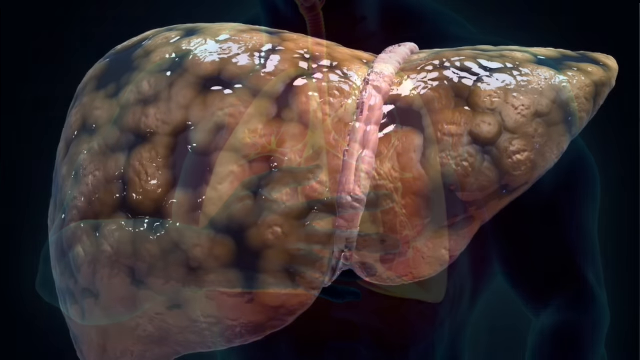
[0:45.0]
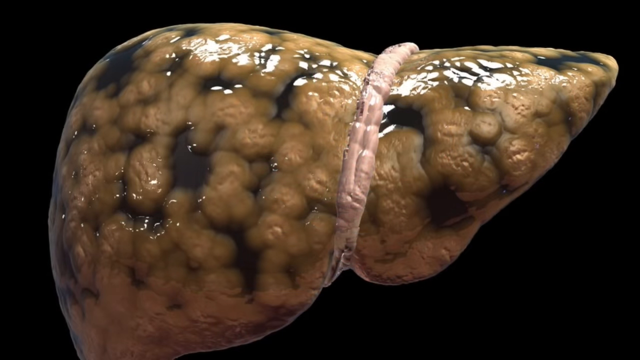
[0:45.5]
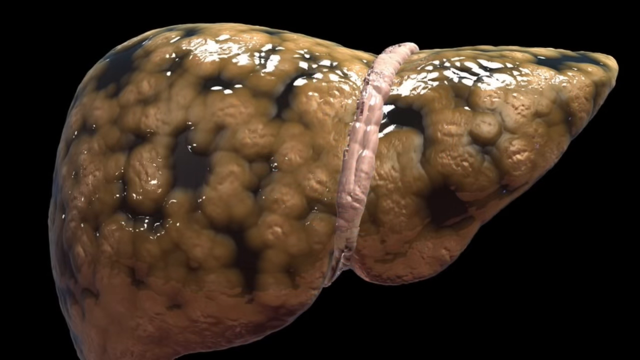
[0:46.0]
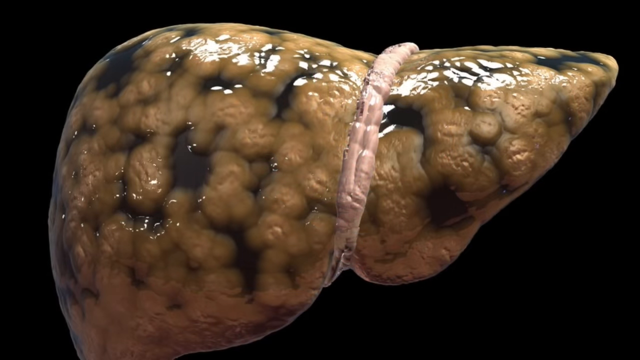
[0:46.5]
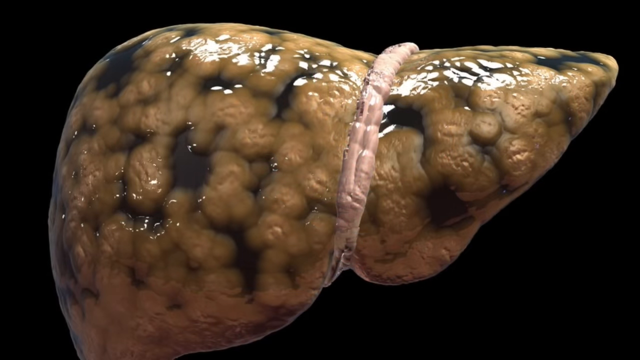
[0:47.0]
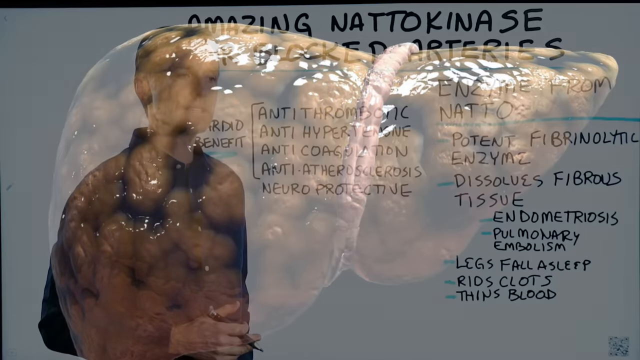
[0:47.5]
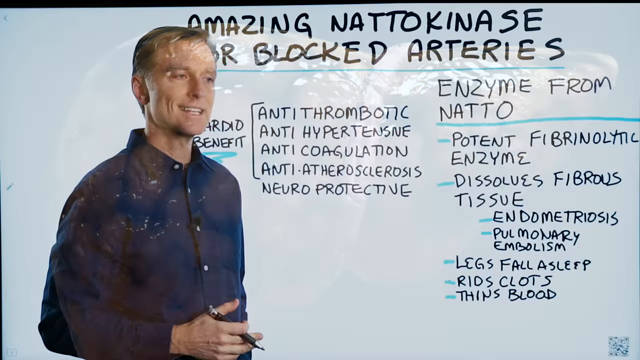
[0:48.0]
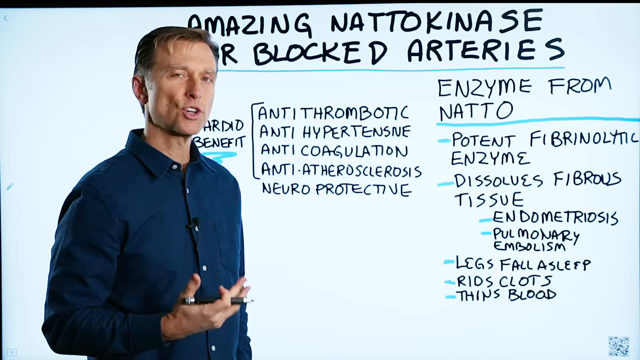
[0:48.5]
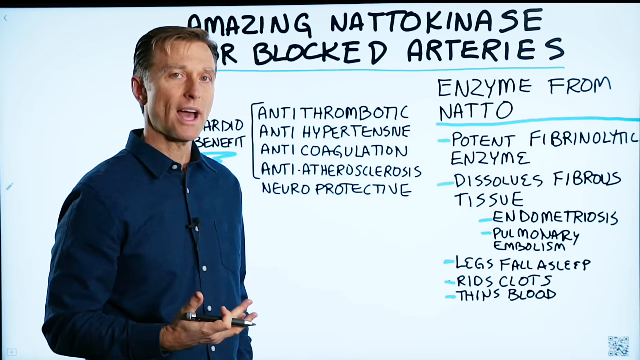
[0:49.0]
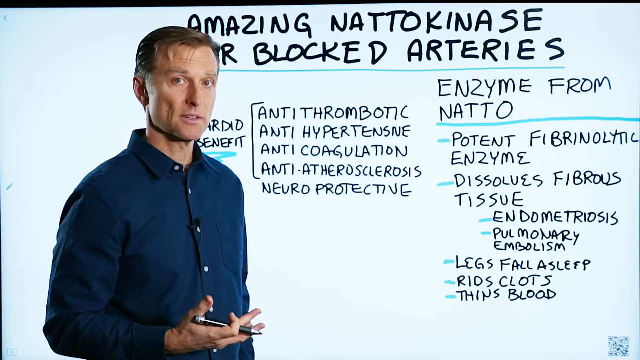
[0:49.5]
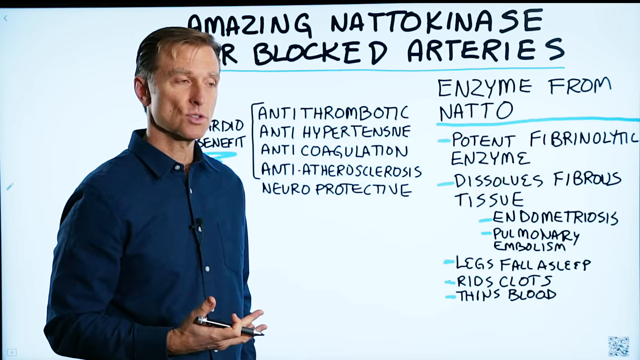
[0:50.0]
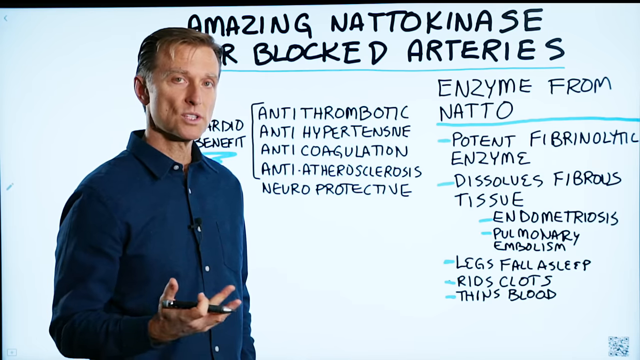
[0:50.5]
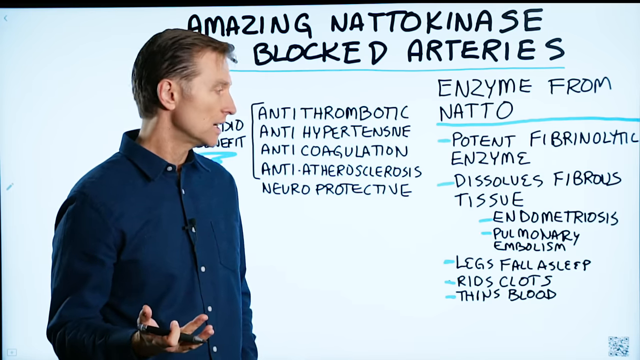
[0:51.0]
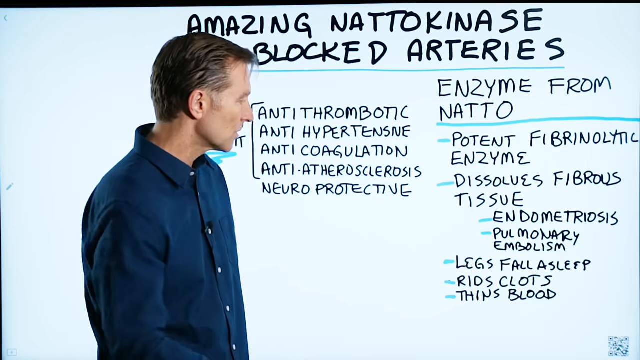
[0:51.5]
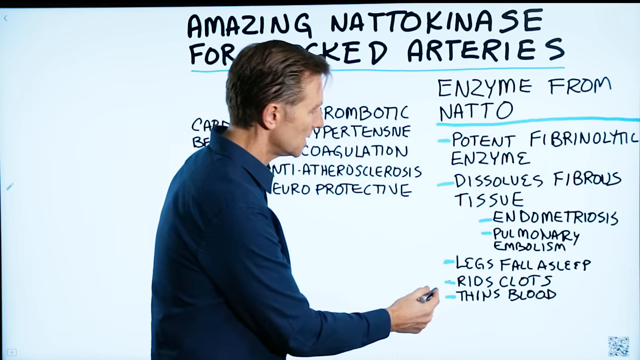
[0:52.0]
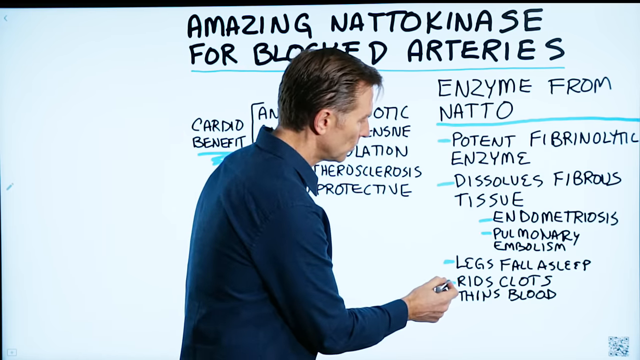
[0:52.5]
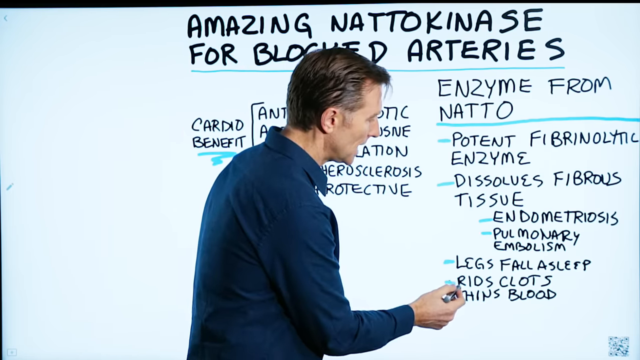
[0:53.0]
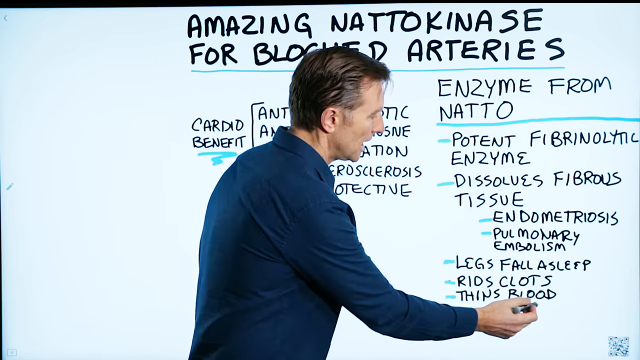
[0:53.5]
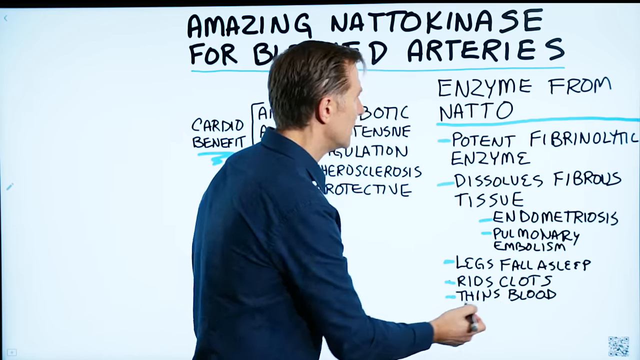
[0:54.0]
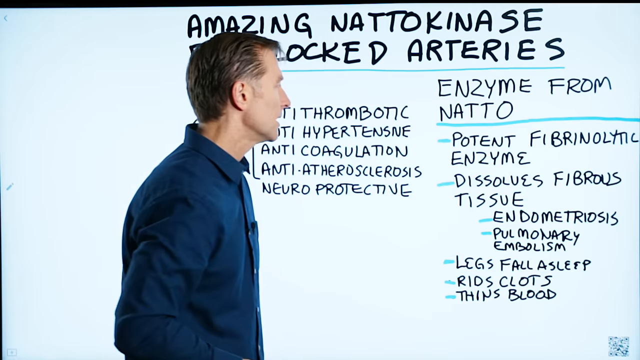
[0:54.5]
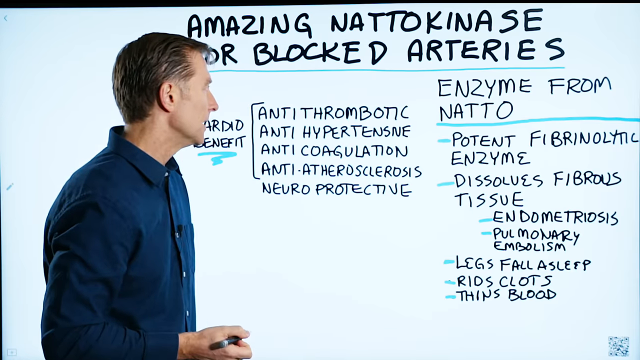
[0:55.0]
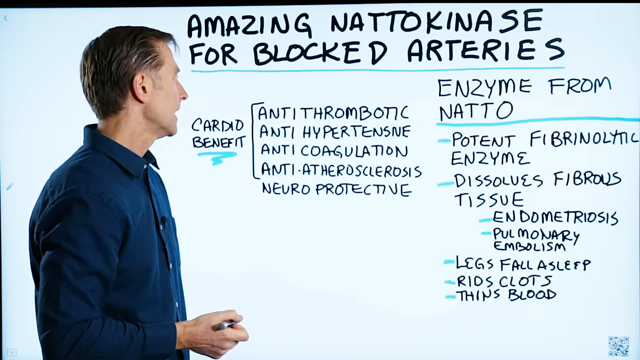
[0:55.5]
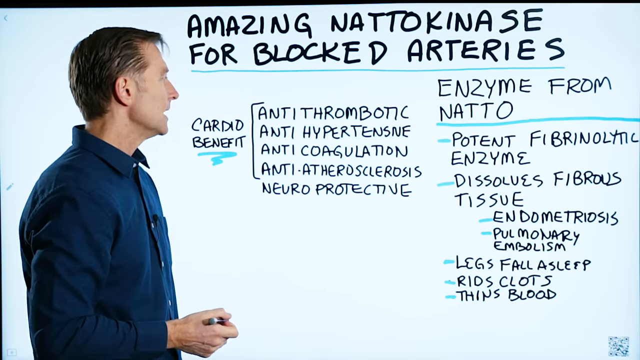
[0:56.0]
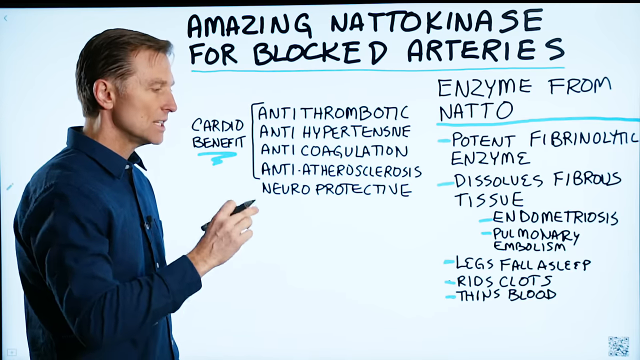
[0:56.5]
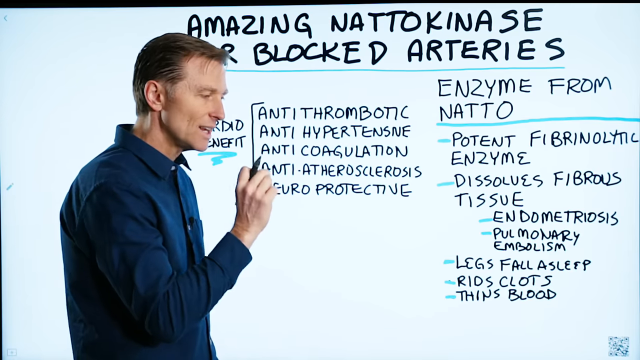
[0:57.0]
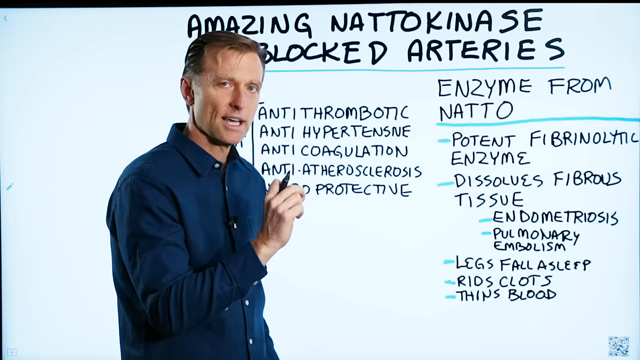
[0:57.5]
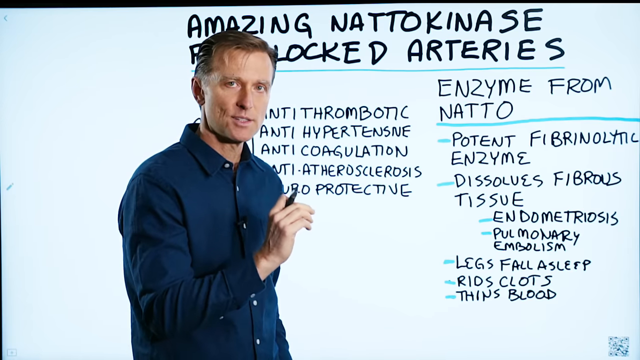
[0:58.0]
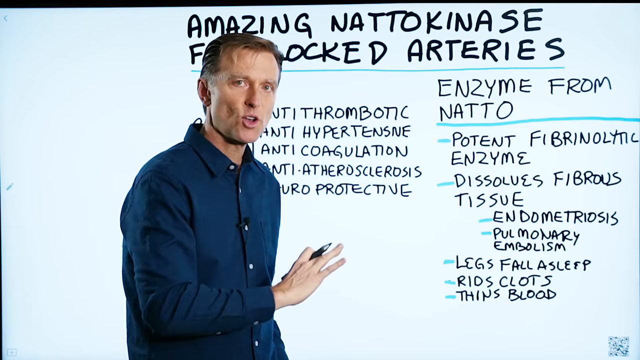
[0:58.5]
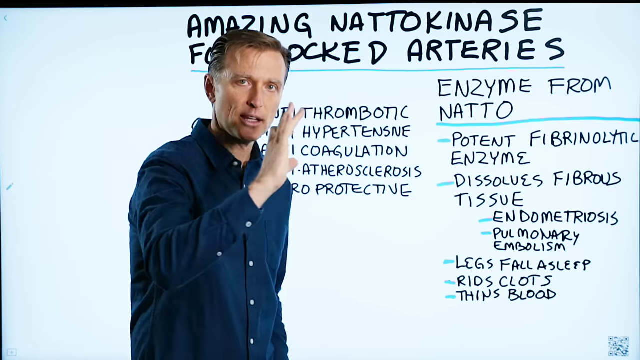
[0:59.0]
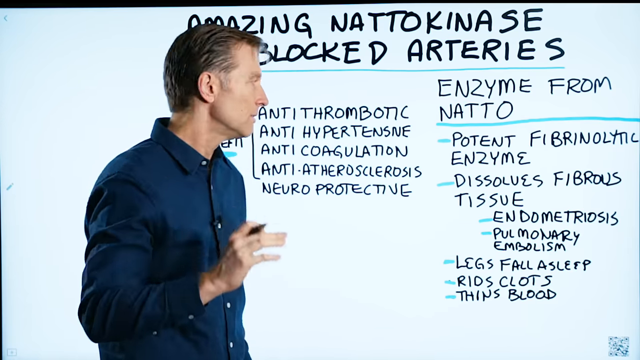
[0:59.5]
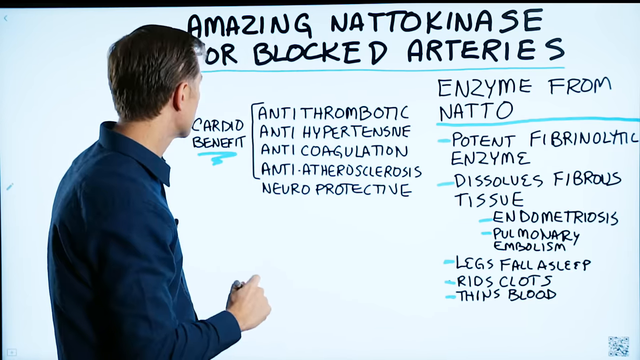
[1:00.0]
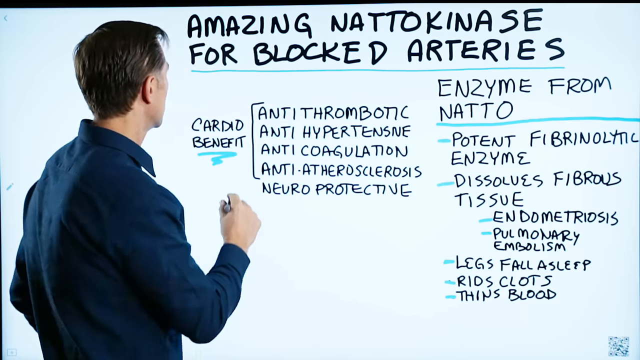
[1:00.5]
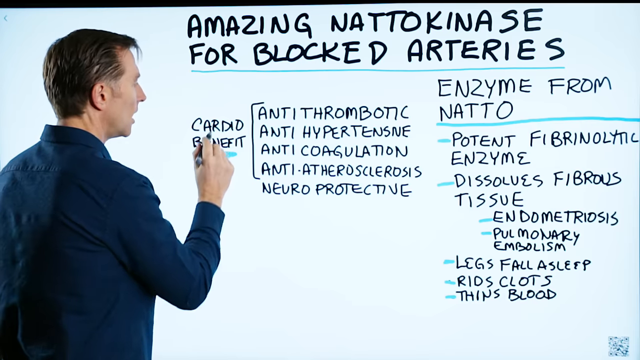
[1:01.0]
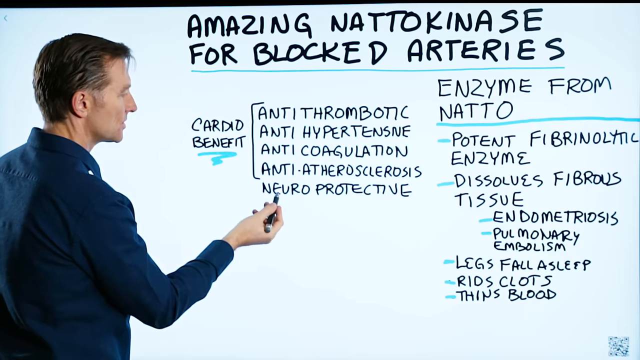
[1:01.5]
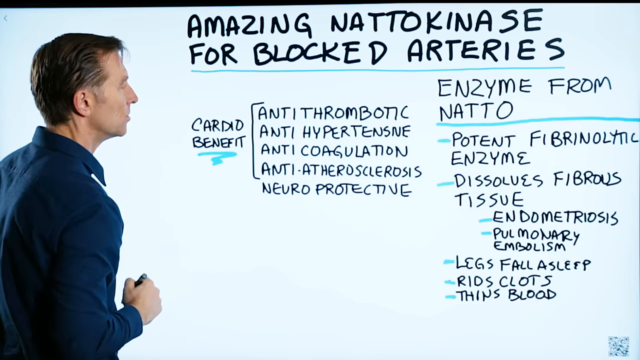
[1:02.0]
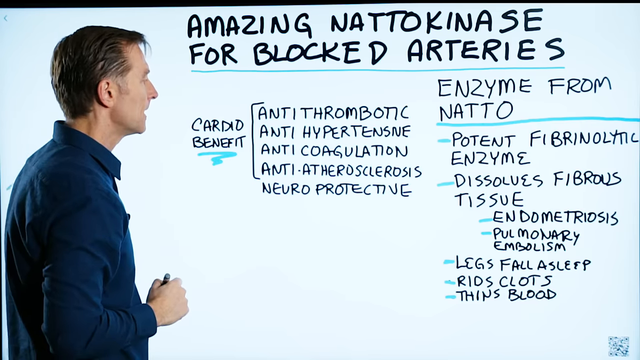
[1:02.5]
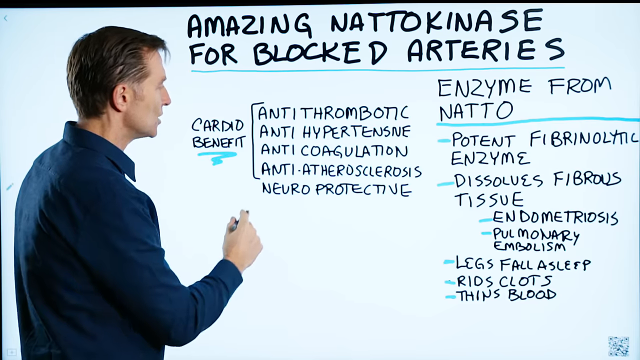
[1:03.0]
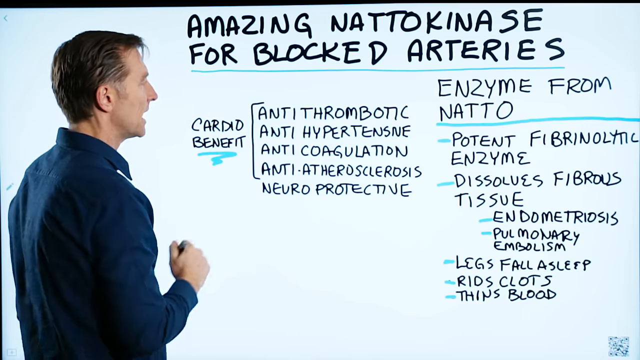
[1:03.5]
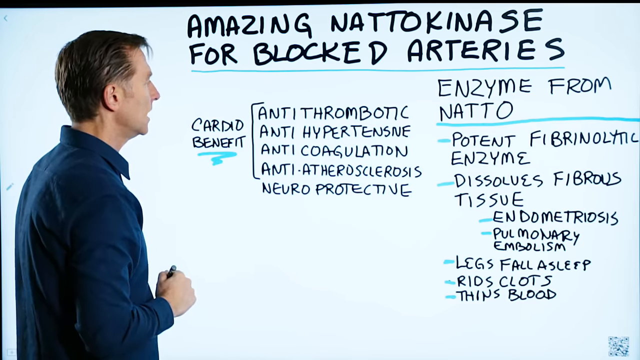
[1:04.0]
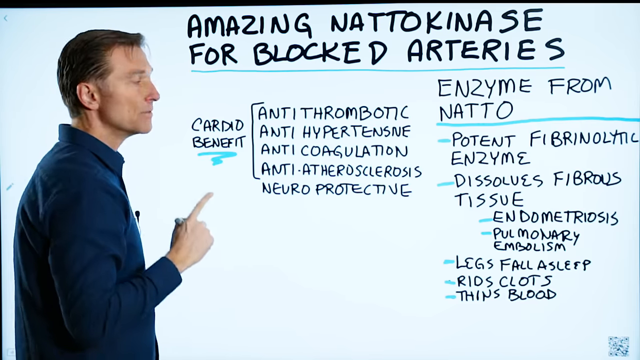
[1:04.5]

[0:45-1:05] An image of a gross-looking liver appears. The view returns to the white man in the dark blue shirt standing in front of the whiteboard, which has writing about the benefits of nato-kinesis for arteries. He points at different words and medical terms on the board. The picture of the liver appears between shots of him. He points to "thins blood" under "legs fall asleep" on the right side of the board, and then points at "cardio benefit".